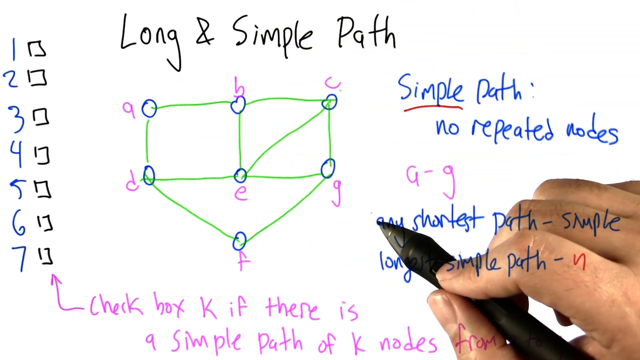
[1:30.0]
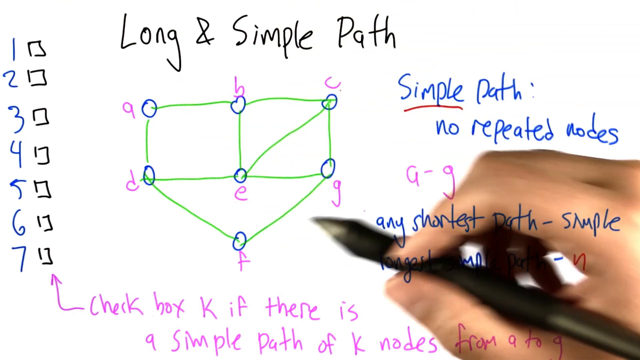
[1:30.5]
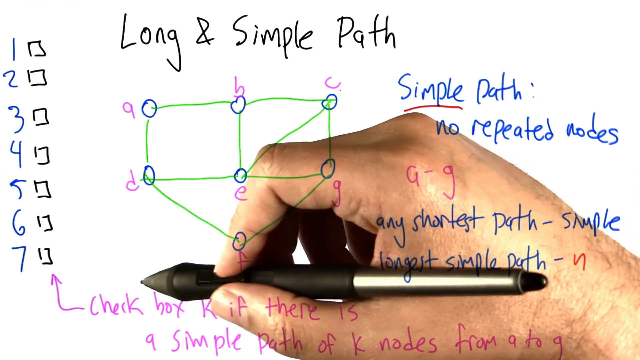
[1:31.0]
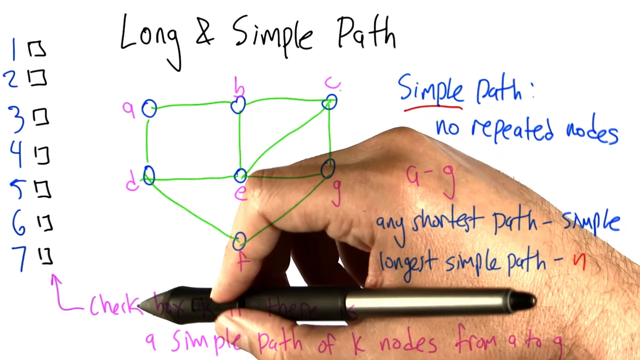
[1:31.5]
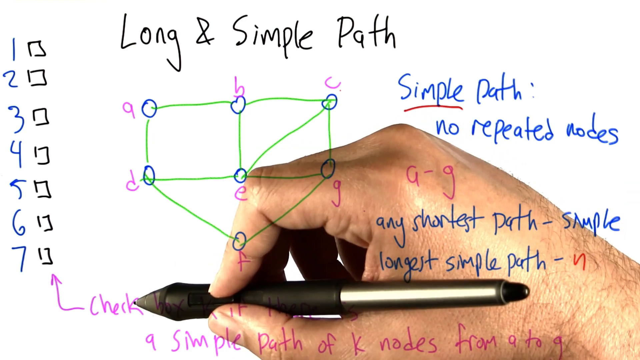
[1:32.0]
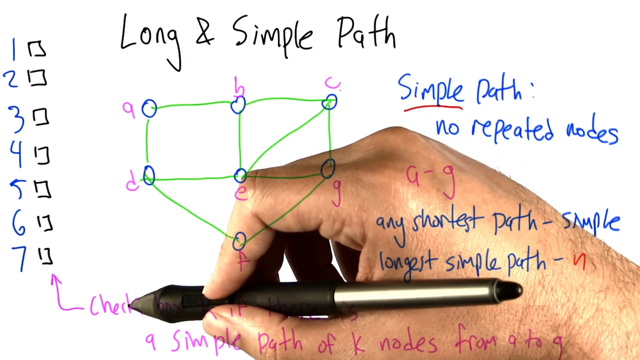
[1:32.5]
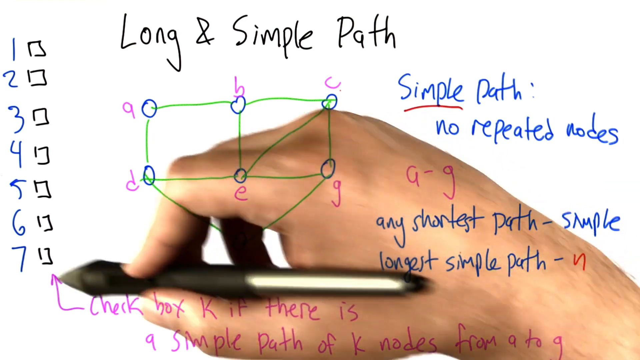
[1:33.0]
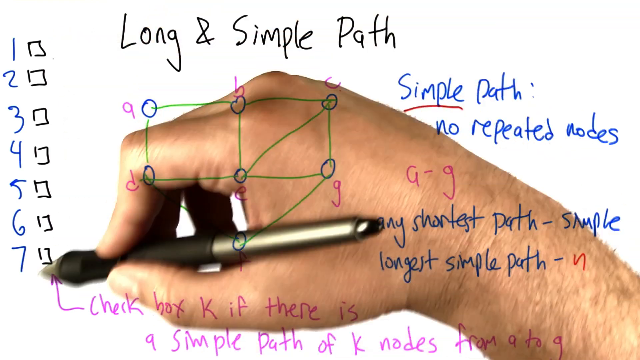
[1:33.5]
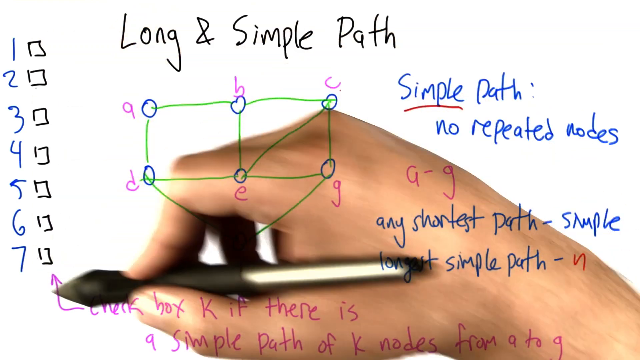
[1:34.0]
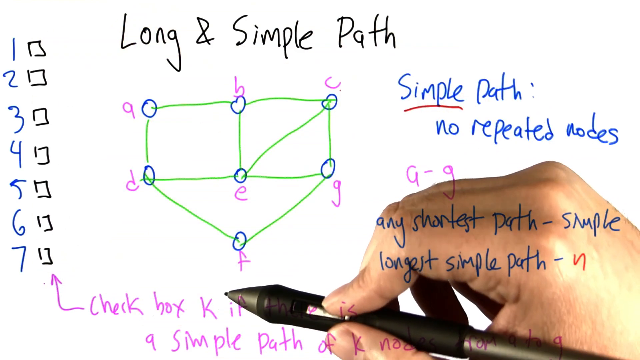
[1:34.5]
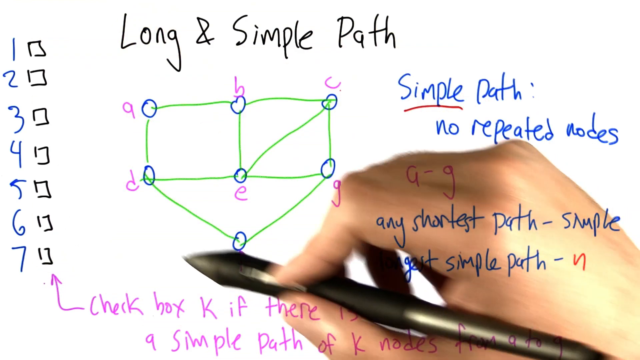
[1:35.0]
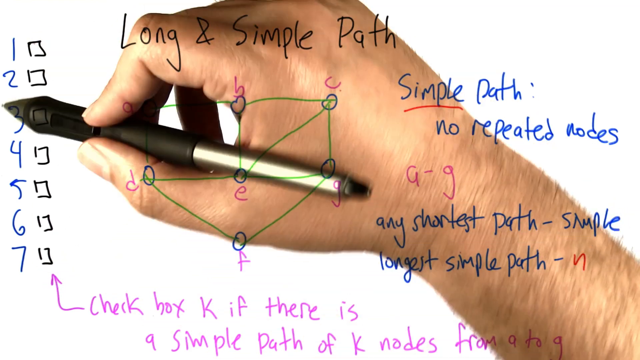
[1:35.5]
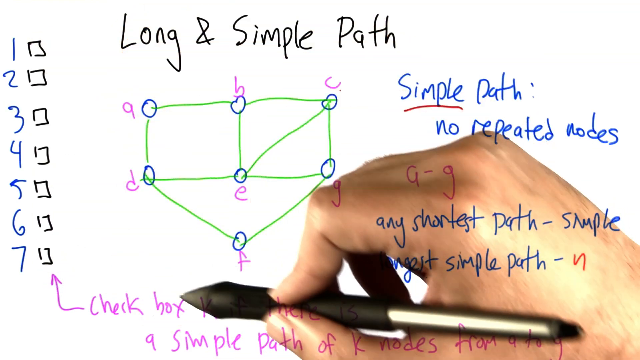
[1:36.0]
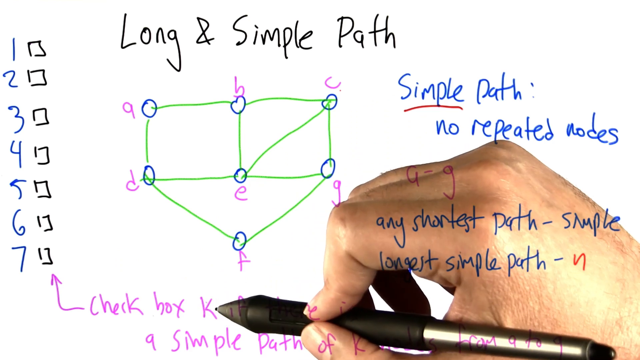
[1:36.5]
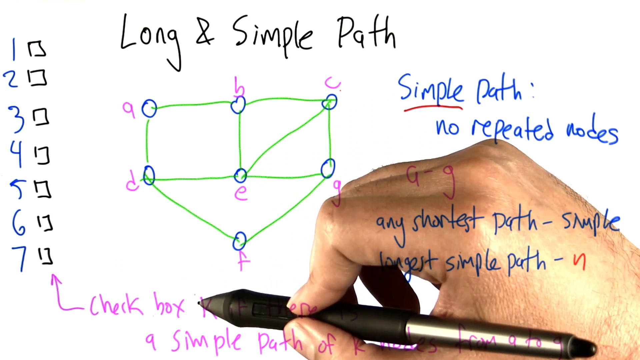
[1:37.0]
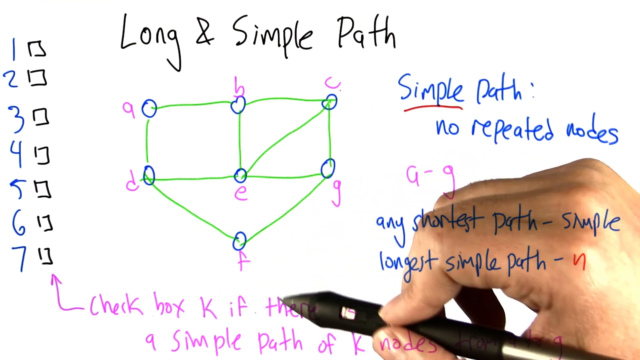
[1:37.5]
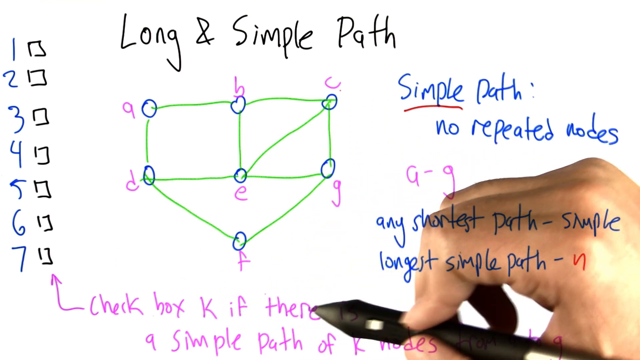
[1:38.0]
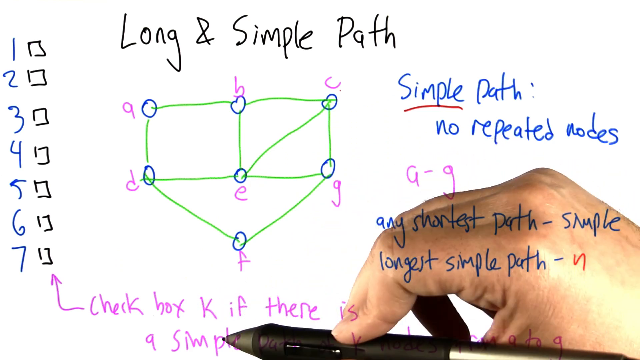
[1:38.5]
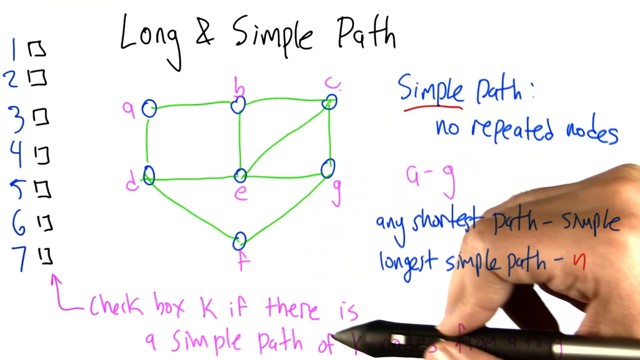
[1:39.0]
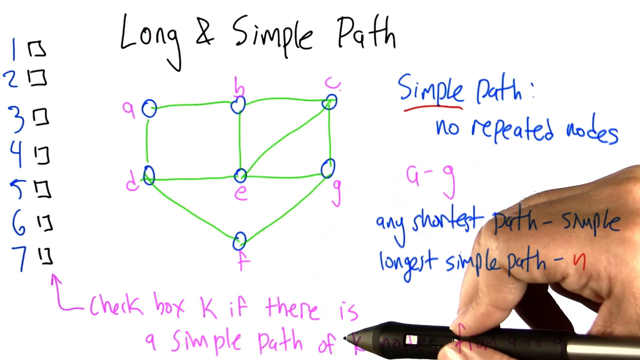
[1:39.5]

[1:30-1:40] A hand, a girl's, holds a black pen and writes on a white sheet of paper. The paper has writing in different colours made with the pen, which looks like a magic pen able to write in blue, pink, red and black from one pen. The hand writes letters, sentences and "simple path," filling the page with writing.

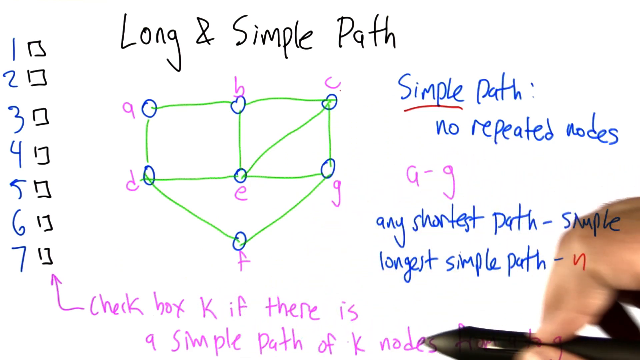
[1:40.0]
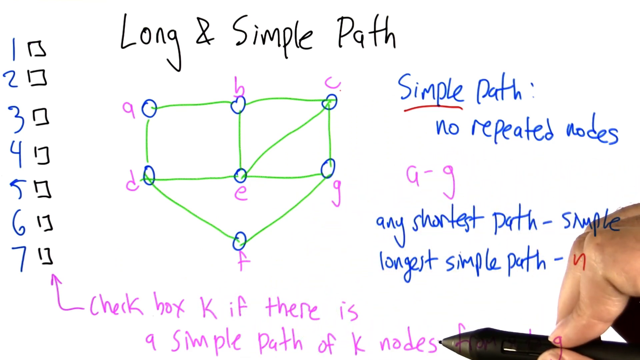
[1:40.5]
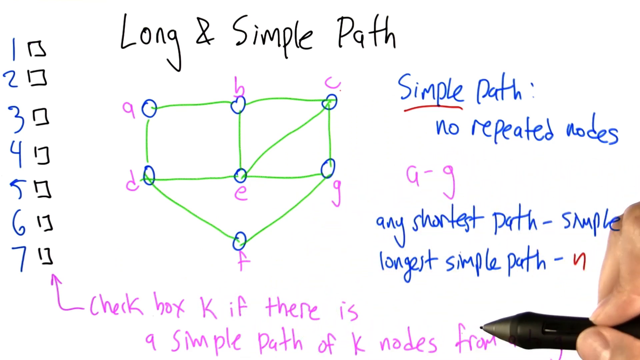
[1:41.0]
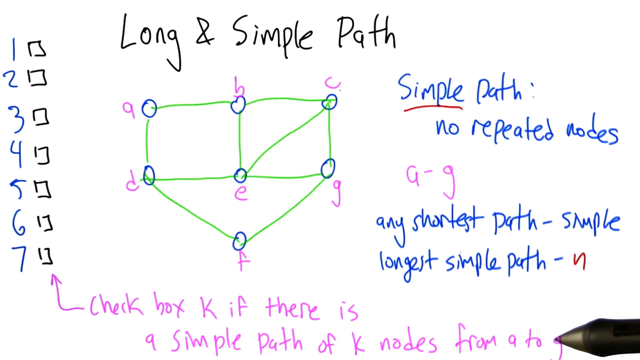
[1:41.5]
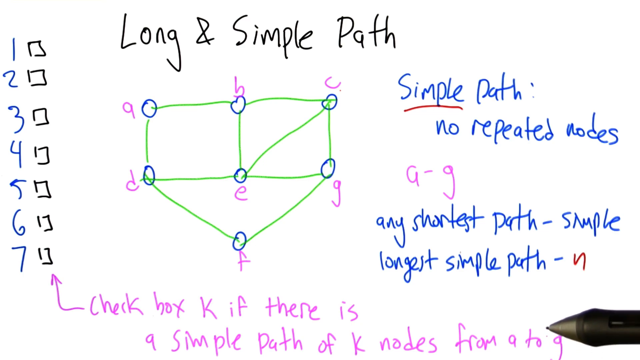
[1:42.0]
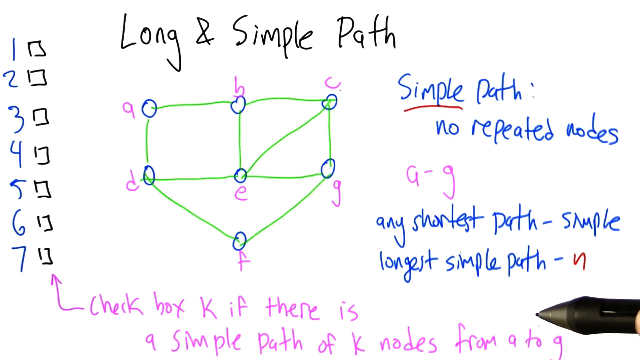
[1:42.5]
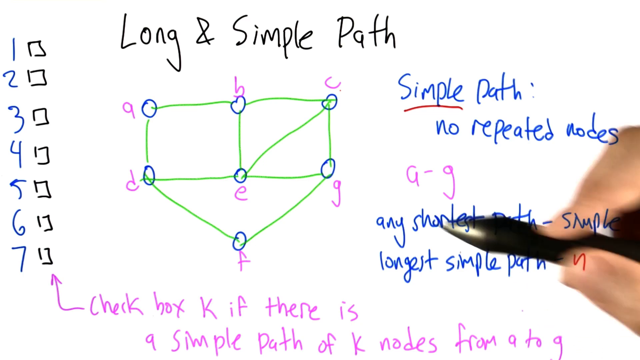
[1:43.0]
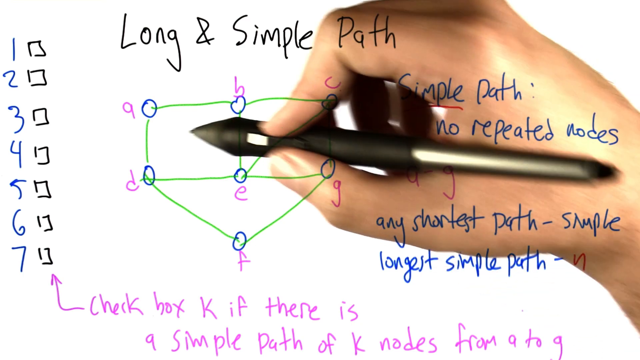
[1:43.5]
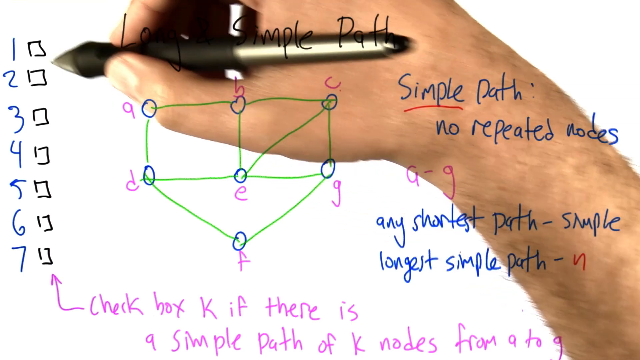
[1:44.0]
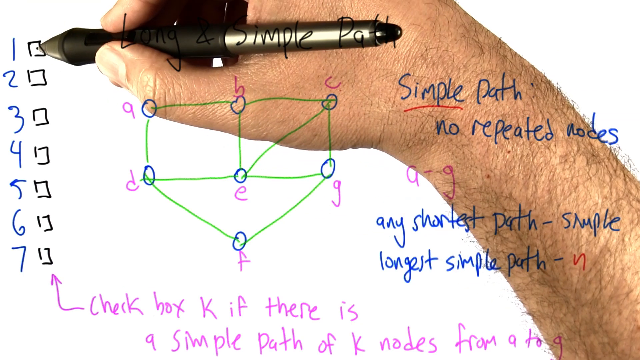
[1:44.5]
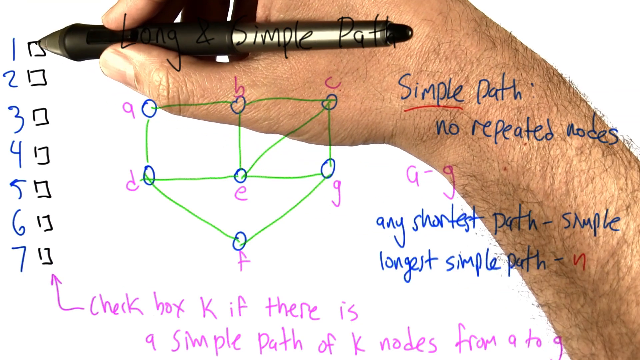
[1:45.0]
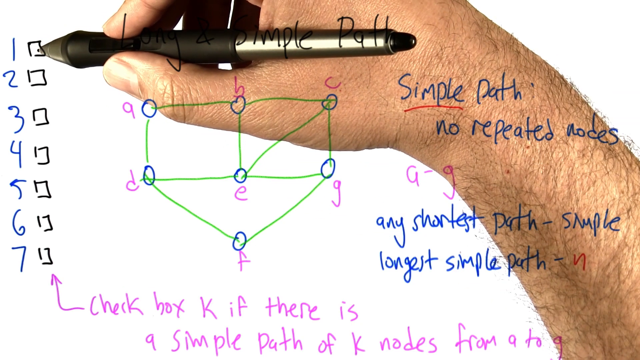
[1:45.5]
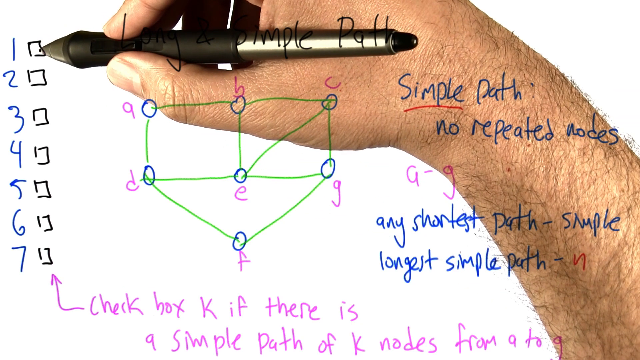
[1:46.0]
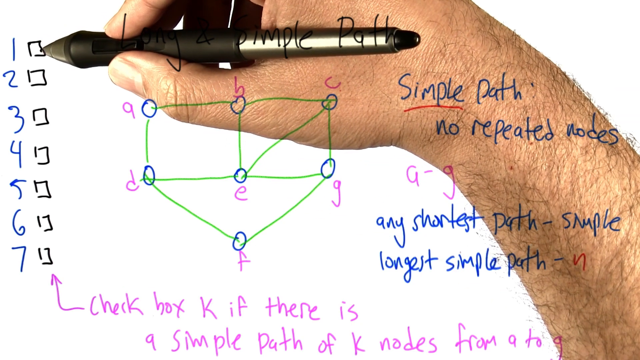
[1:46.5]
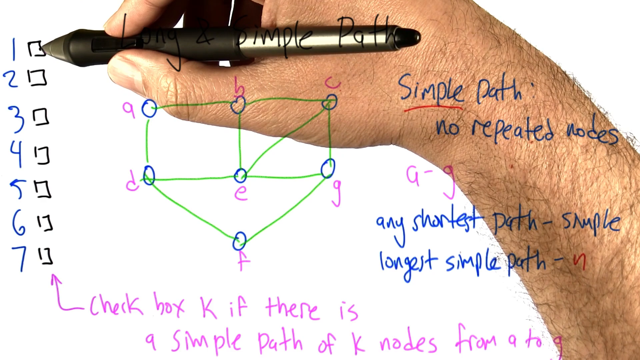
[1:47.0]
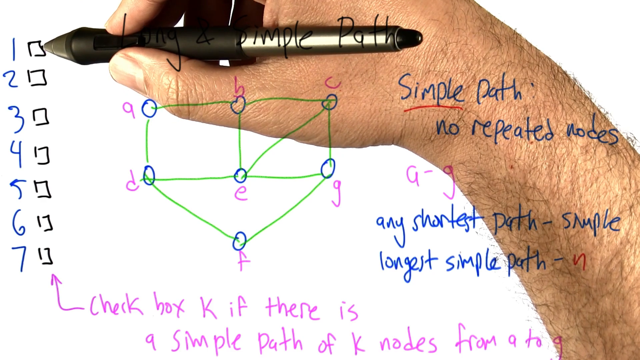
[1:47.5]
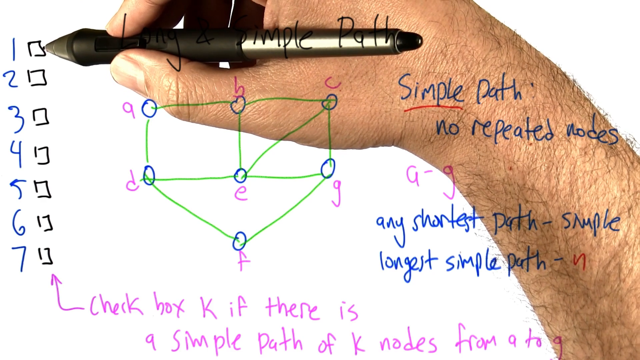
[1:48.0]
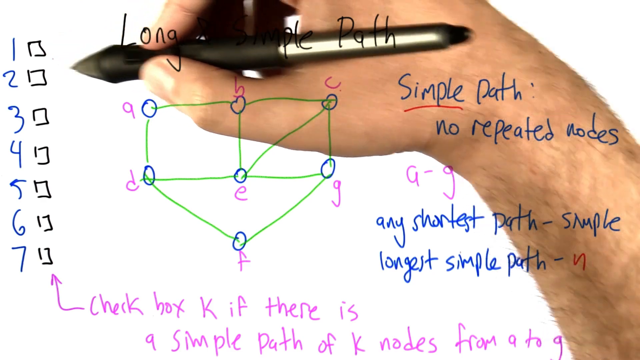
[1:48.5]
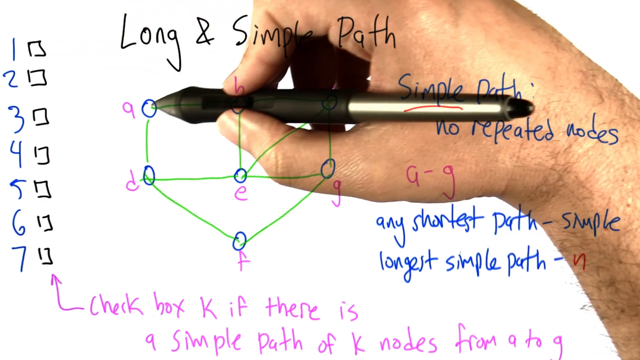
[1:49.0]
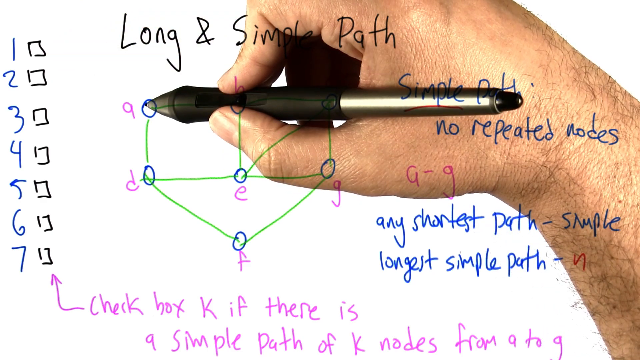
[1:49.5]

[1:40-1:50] A man's hand holds a pen and writes on paper: letters, long sentences and words. The black pen appears to produce different colours, such as black, blue, green and red. No other activity takes place.